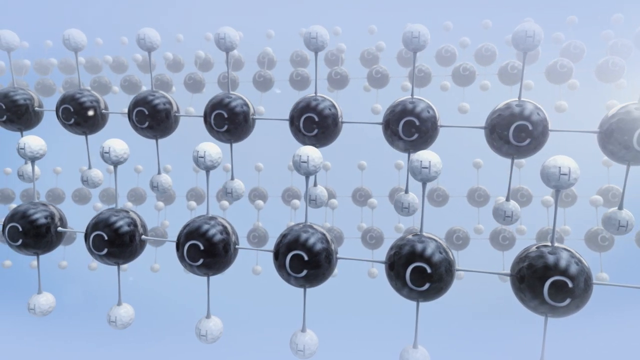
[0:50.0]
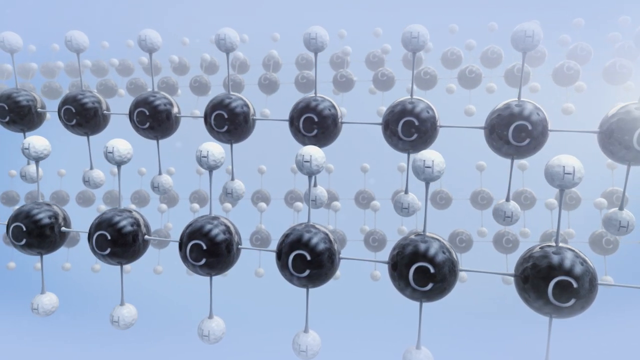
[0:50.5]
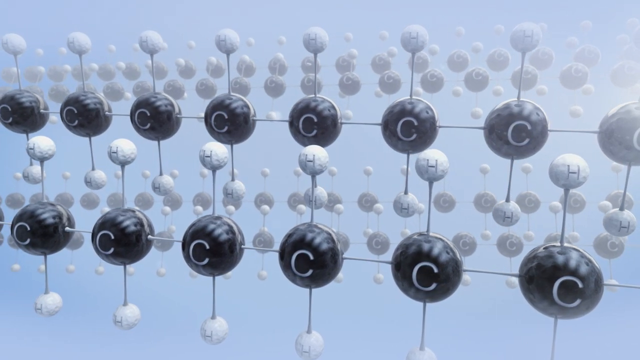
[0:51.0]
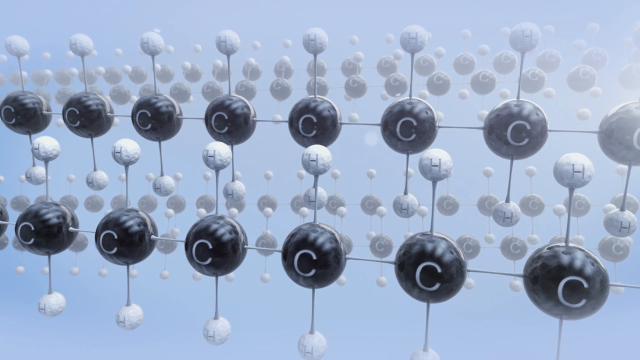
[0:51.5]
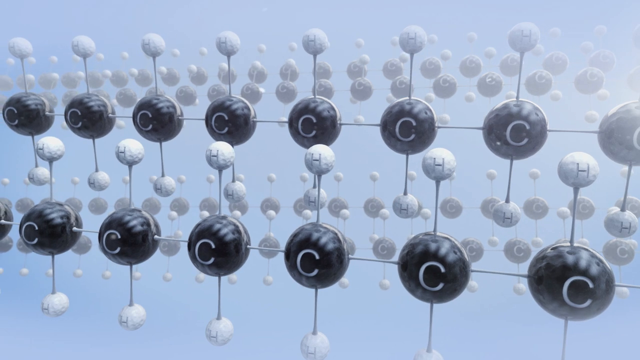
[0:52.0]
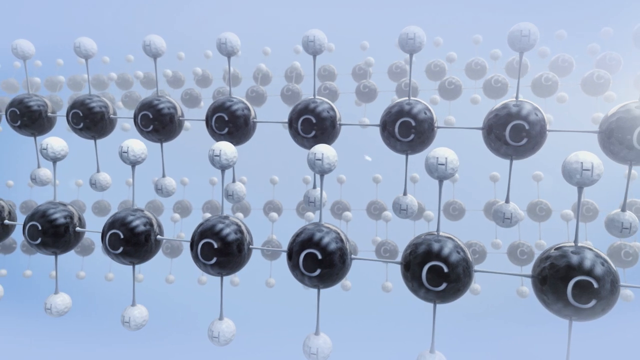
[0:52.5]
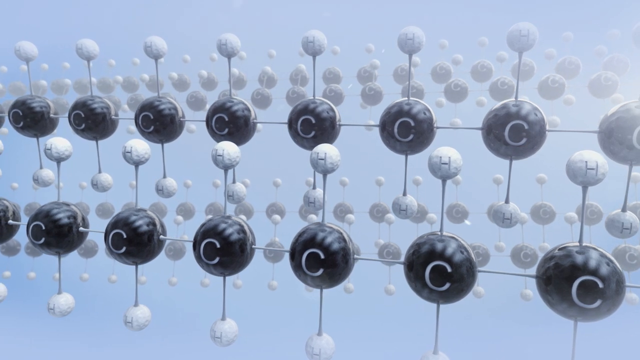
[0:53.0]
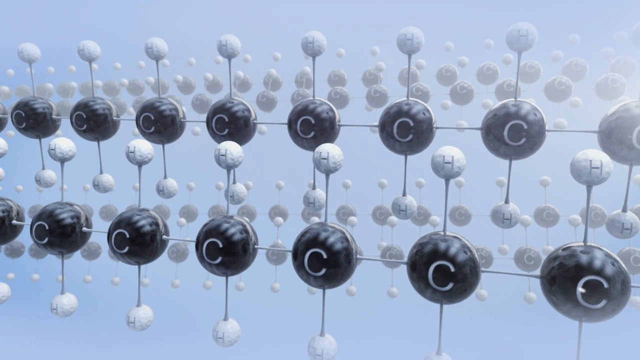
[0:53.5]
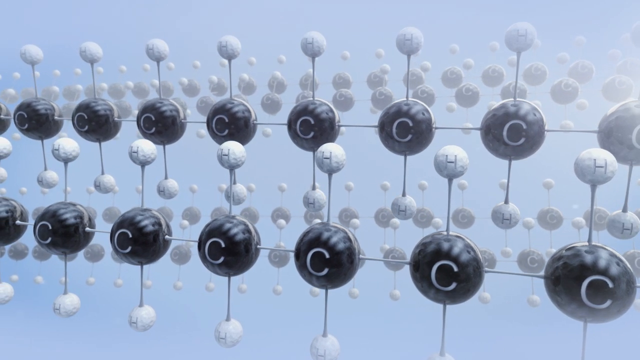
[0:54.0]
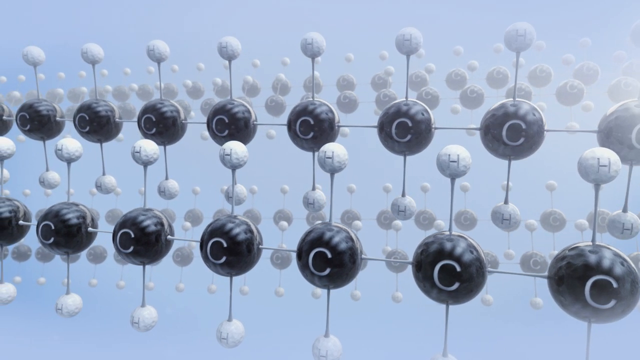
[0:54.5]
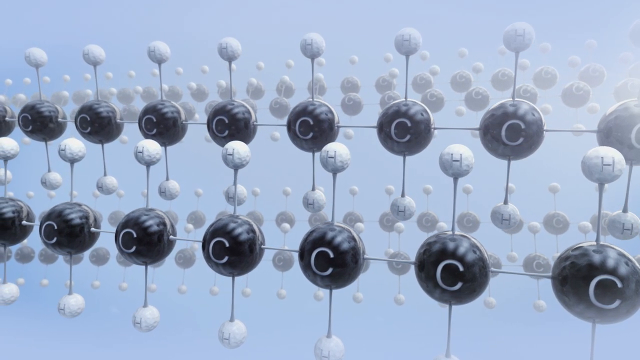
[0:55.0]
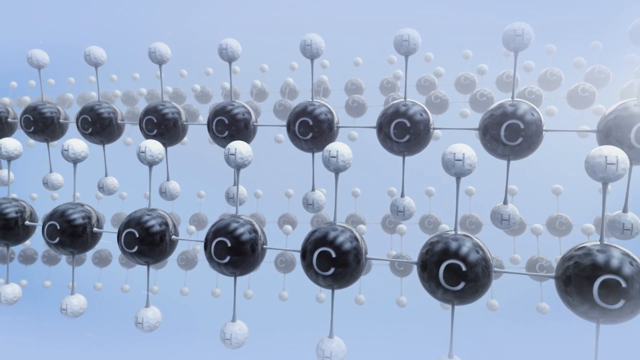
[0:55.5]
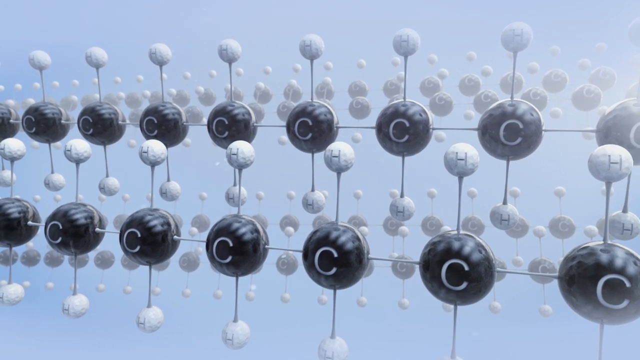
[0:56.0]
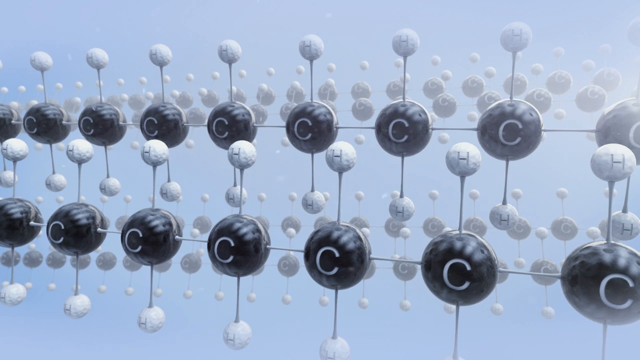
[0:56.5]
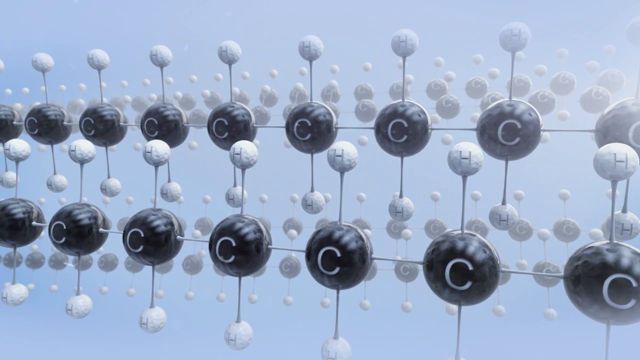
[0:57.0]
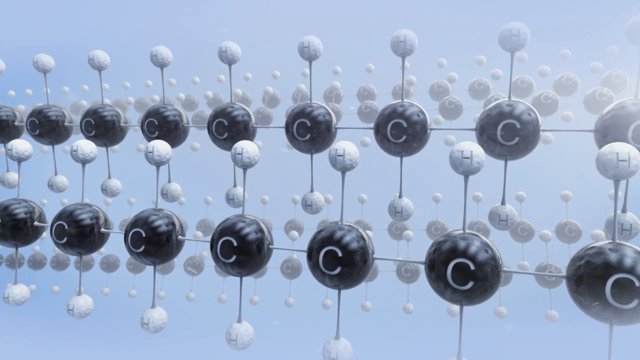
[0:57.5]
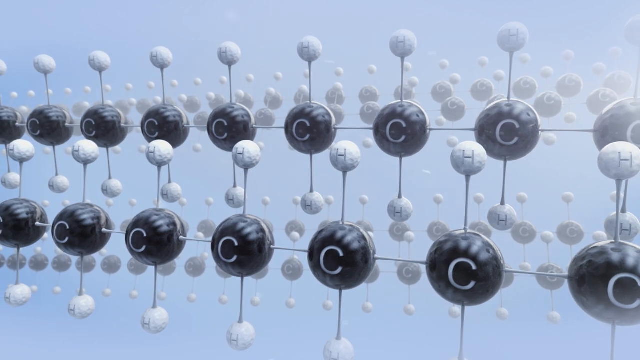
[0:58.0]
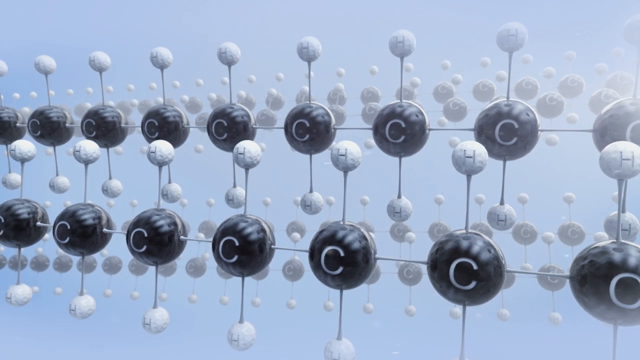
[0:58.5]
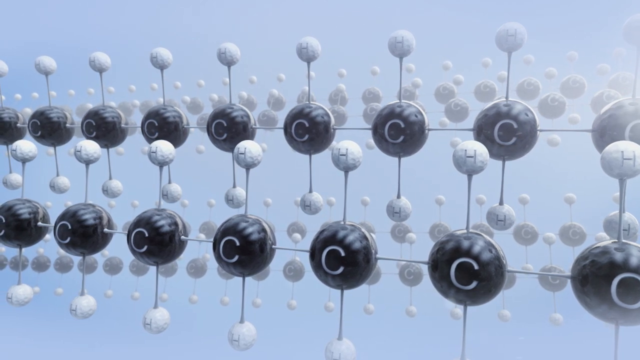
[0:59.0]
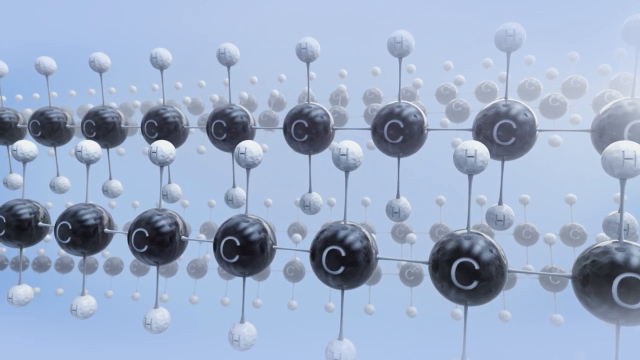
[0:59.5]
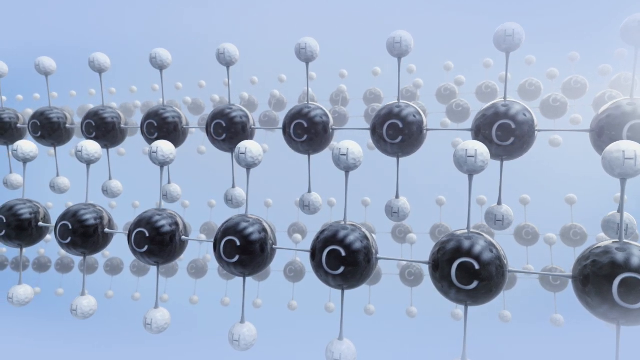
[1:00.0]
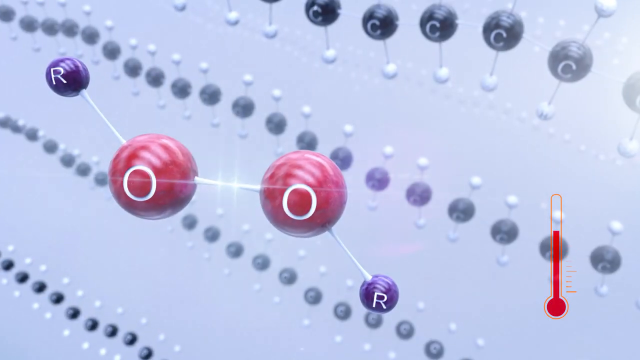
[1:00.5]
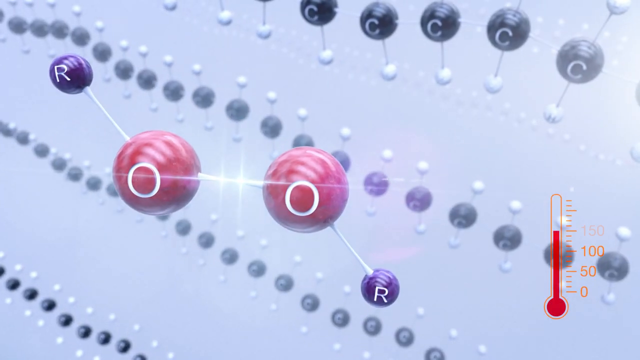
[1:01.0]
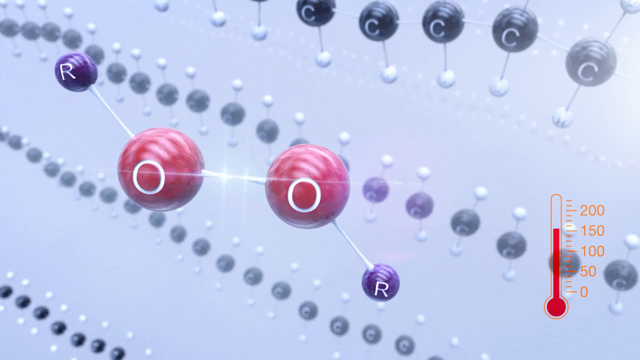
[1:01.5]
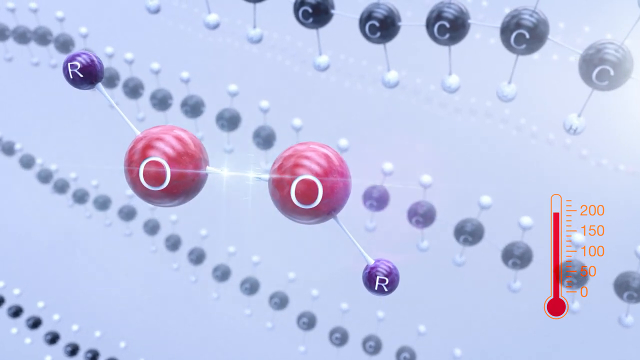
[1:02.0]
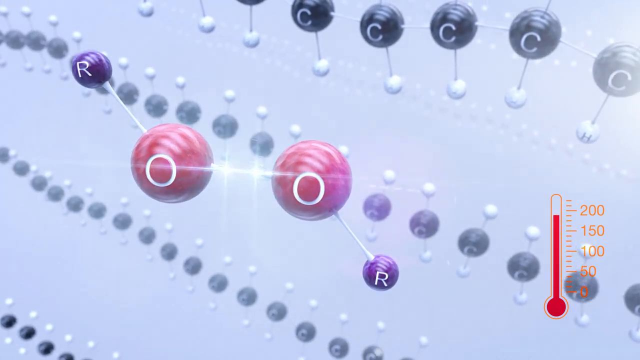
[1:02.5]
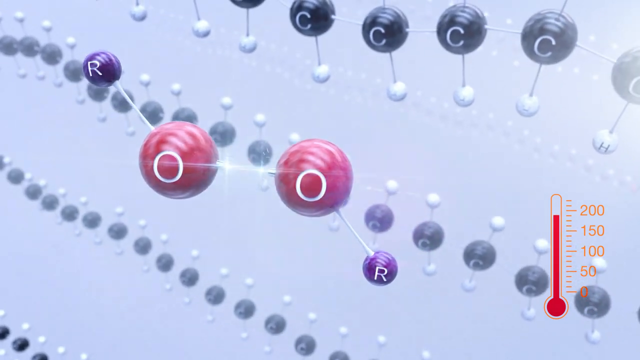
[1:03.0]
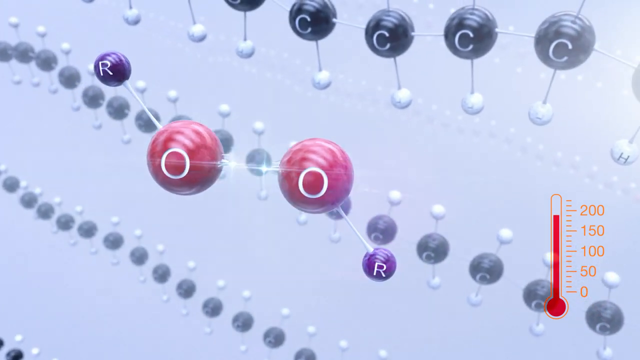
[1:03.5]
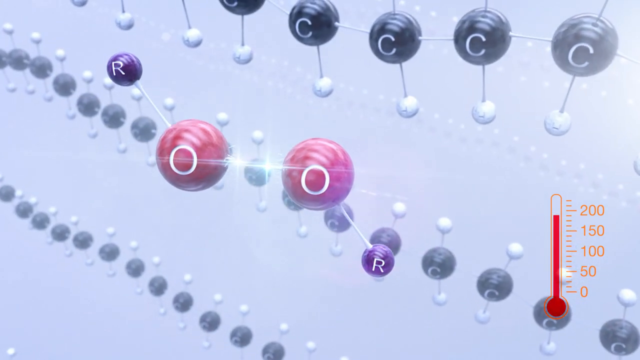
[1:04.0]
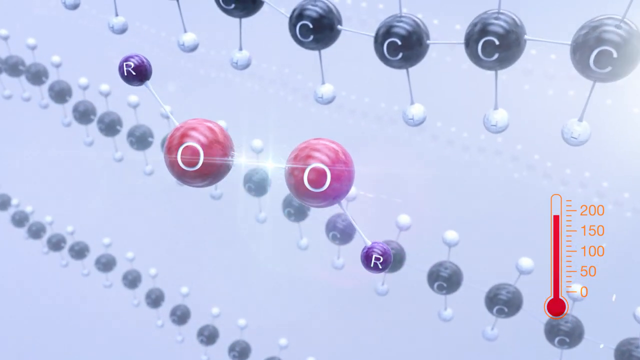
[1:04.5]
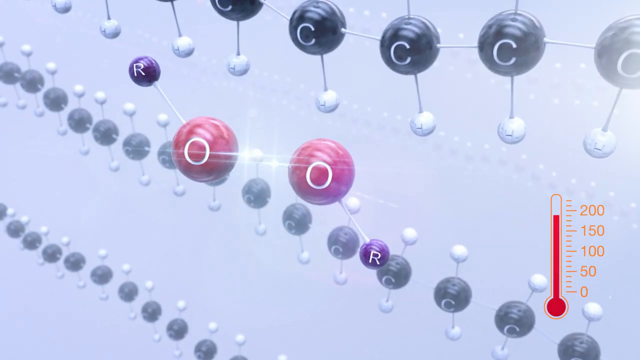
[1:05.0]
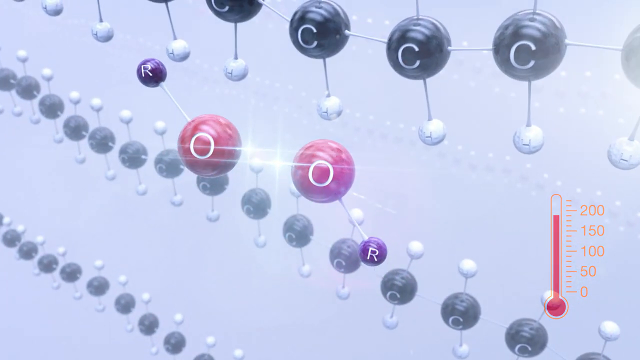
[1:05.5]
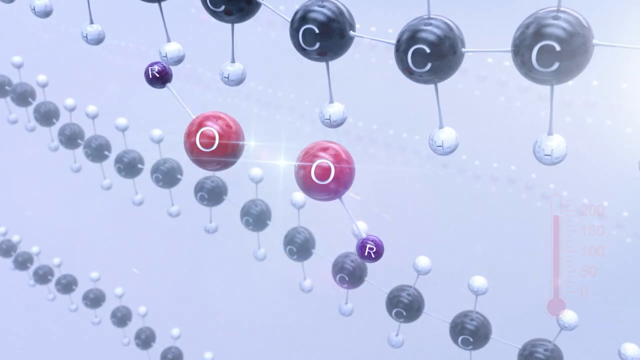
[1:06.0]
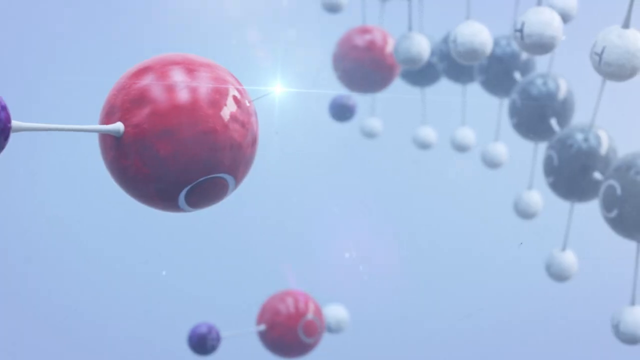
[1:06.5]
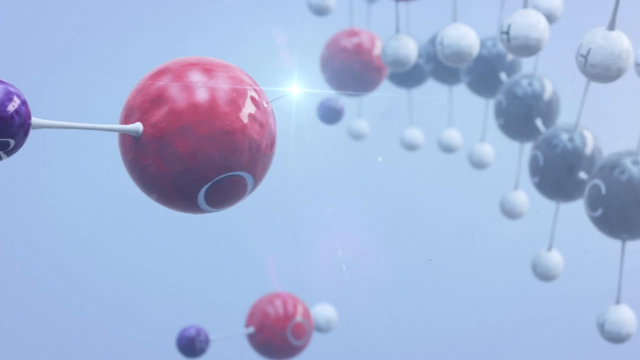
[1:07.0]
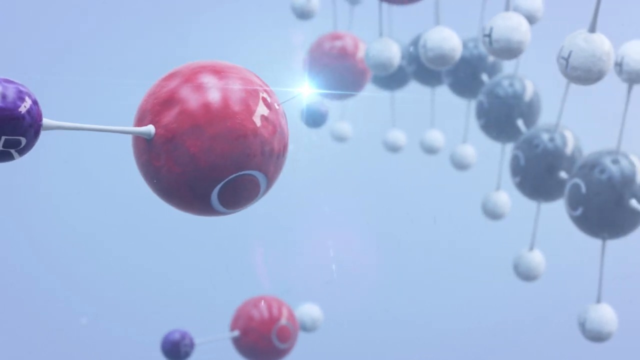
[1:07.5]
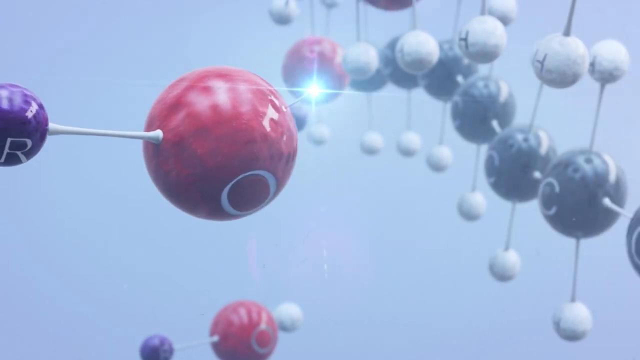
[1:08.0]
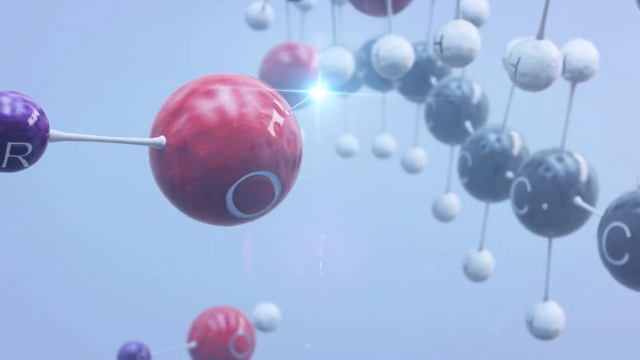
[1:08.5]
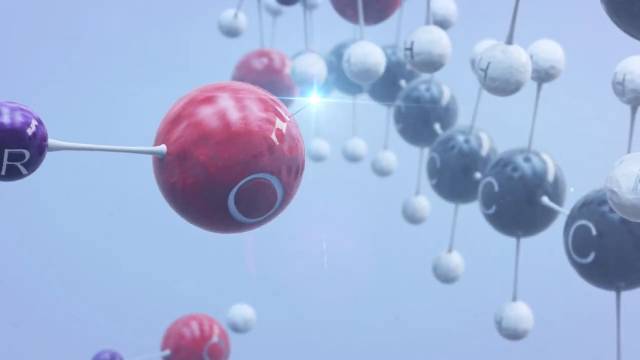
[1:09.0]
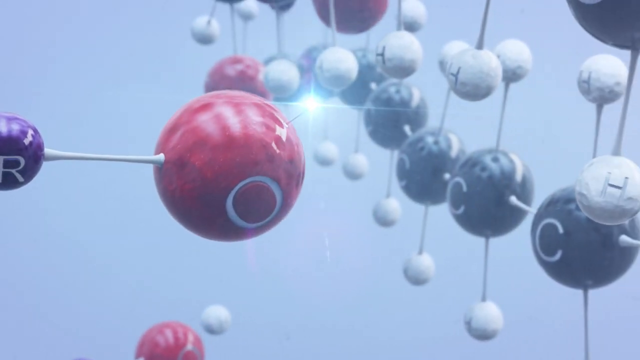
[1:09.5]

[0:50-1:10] On a light blue screen, two rows of black balls run across the screen, one on top of the other, with nine balls in each row. Each black ball has the letter C on it. A small stick comes off the top and the bottom of each ball, and at the ends of those sticks are white balls, each with the letter H. It then cuts to another screen showing two red balls with a line connecting them in the middle, each marked with the letter O. Little white sticks come off the ends of those balls, ending in purple balls, each with the letter R. These balls float over to touch the black balls with the Cs on them.